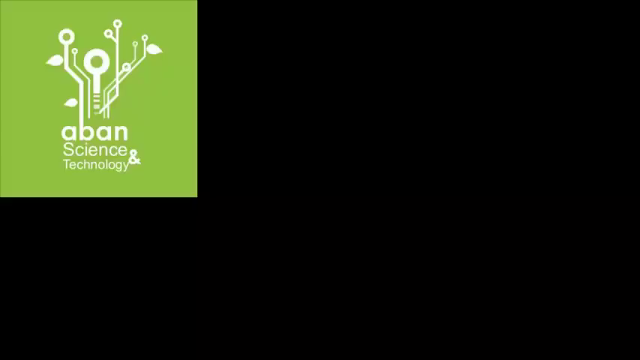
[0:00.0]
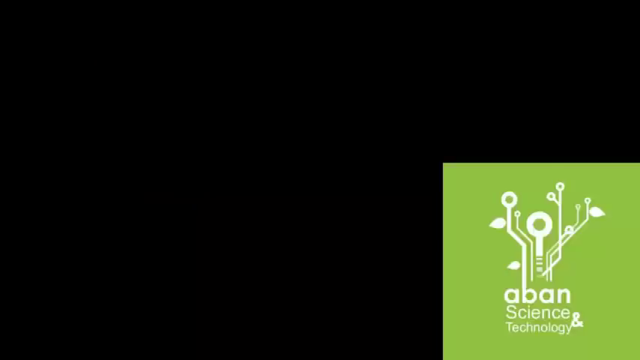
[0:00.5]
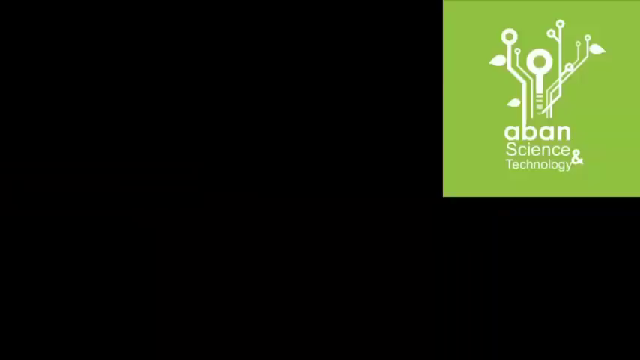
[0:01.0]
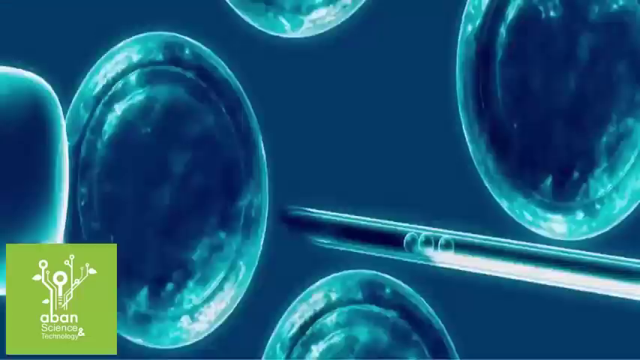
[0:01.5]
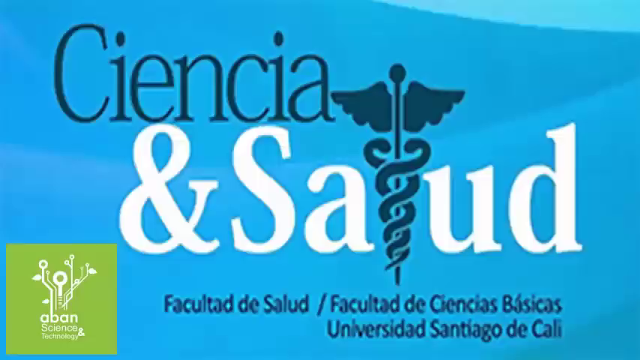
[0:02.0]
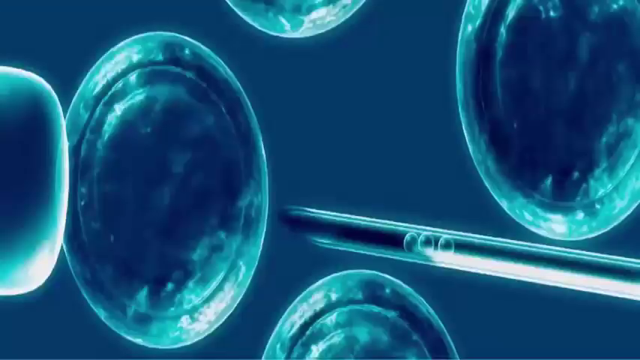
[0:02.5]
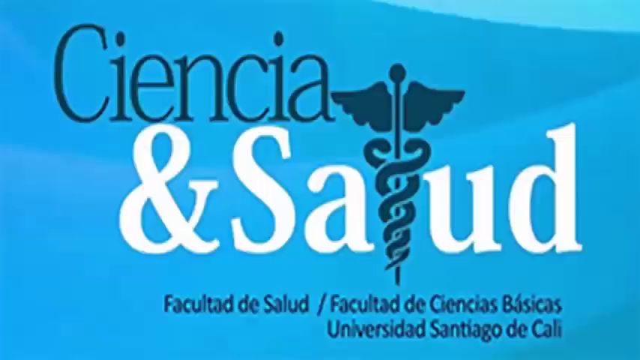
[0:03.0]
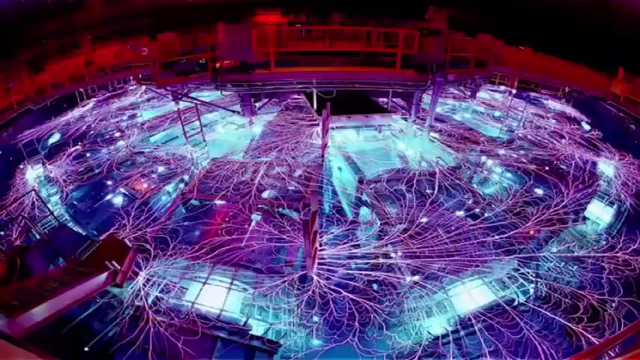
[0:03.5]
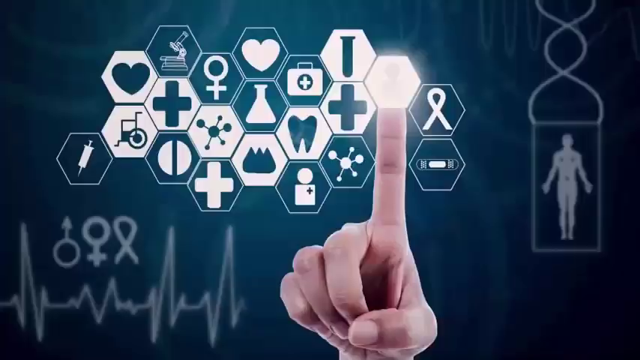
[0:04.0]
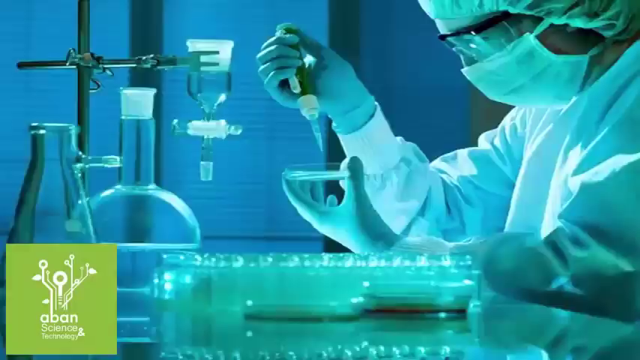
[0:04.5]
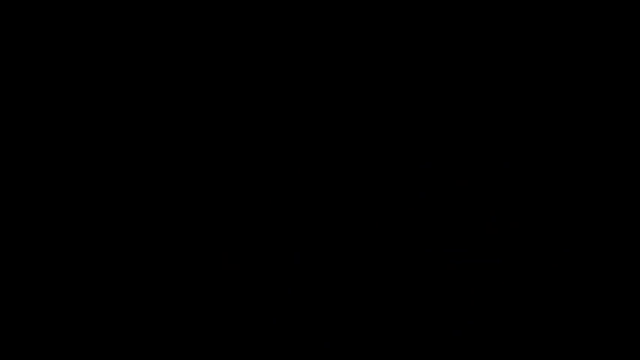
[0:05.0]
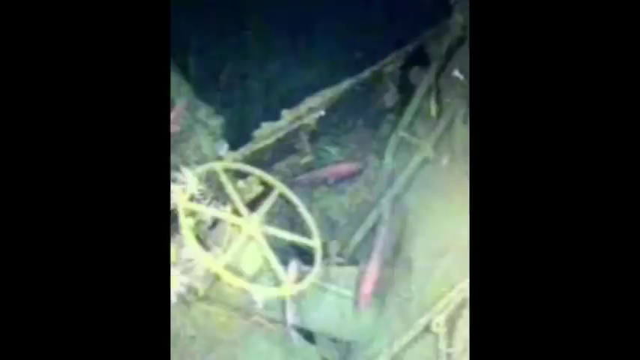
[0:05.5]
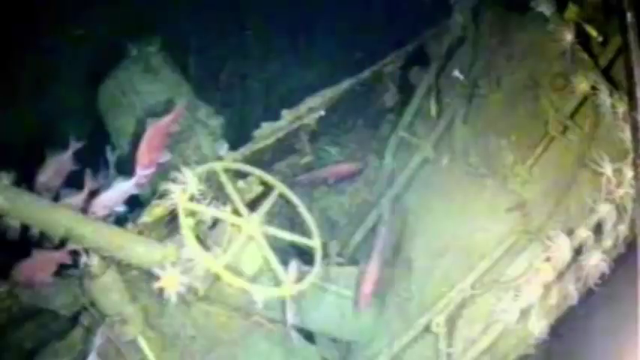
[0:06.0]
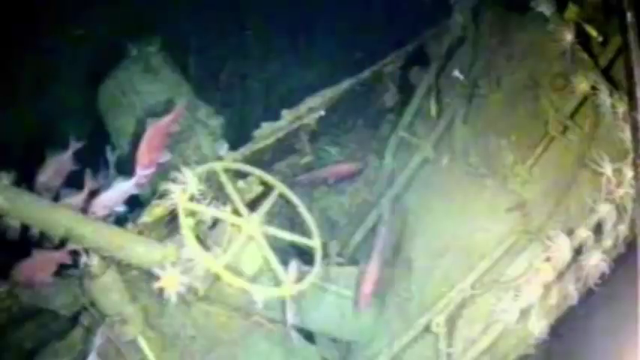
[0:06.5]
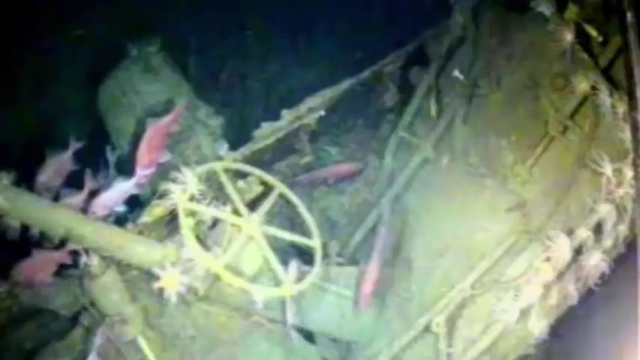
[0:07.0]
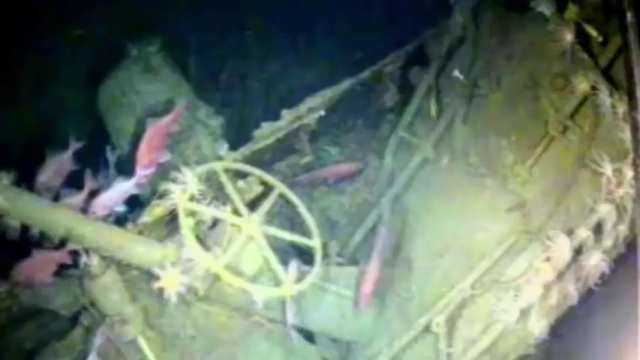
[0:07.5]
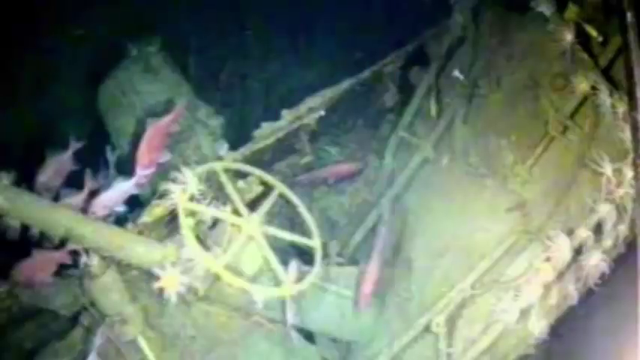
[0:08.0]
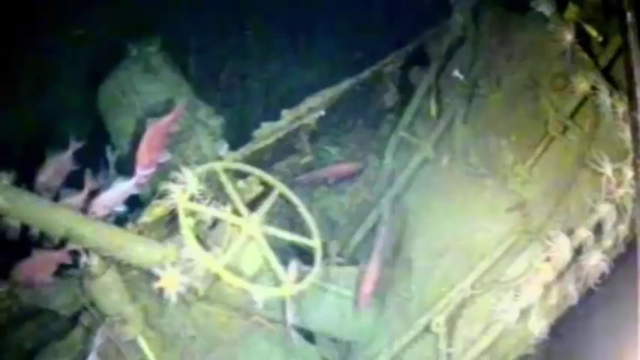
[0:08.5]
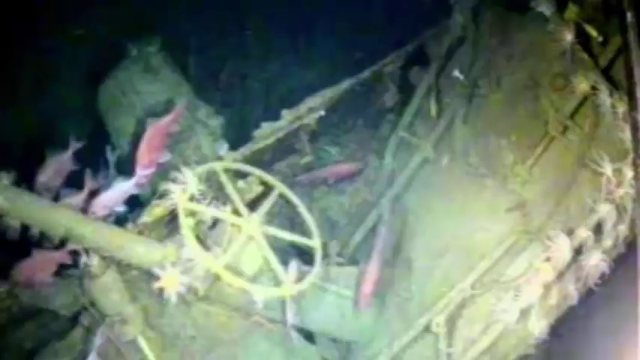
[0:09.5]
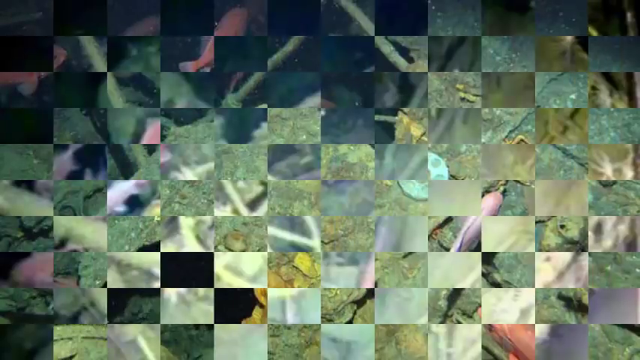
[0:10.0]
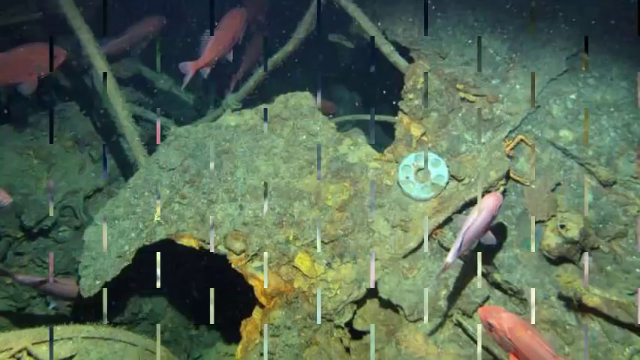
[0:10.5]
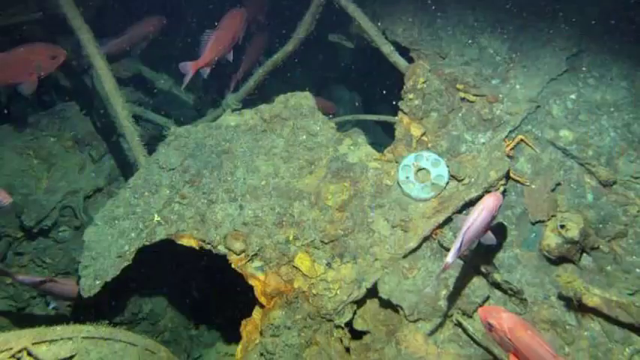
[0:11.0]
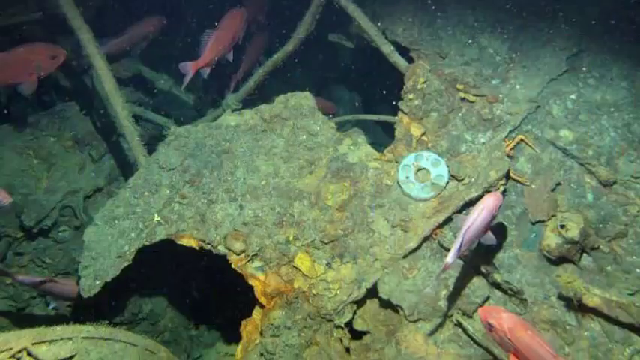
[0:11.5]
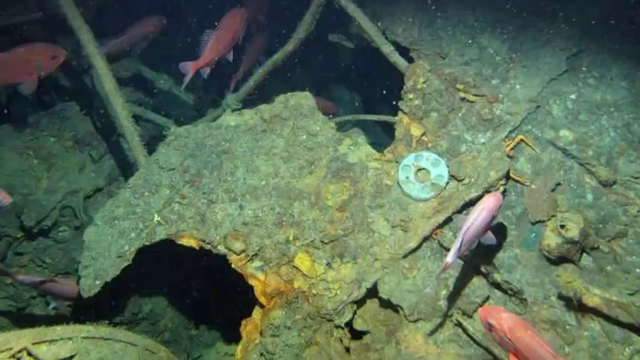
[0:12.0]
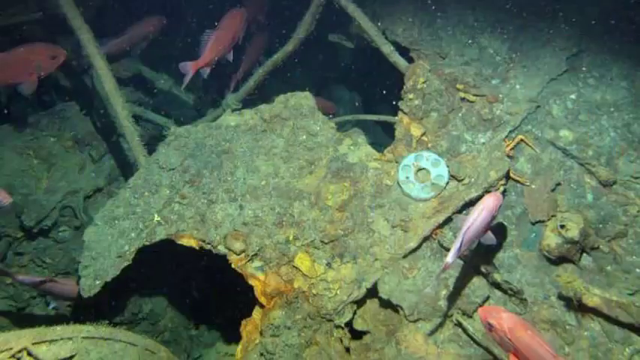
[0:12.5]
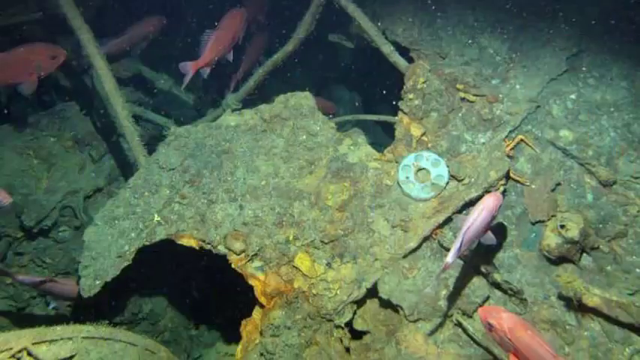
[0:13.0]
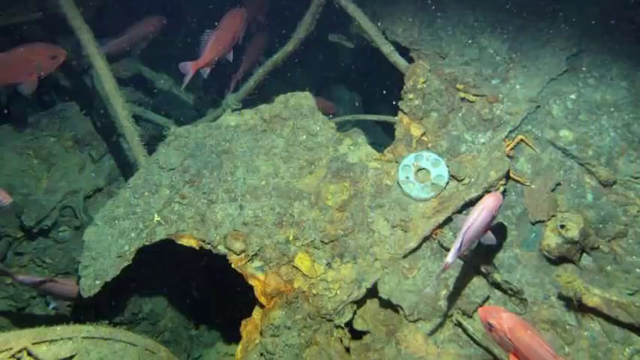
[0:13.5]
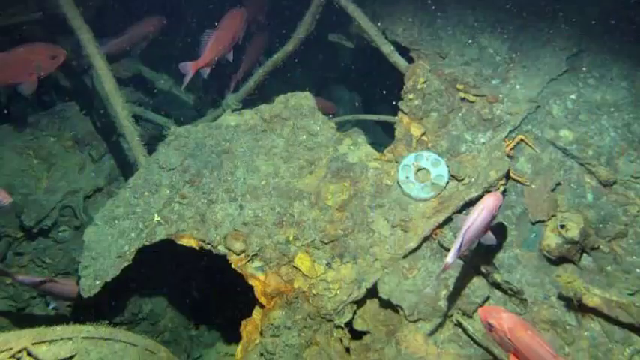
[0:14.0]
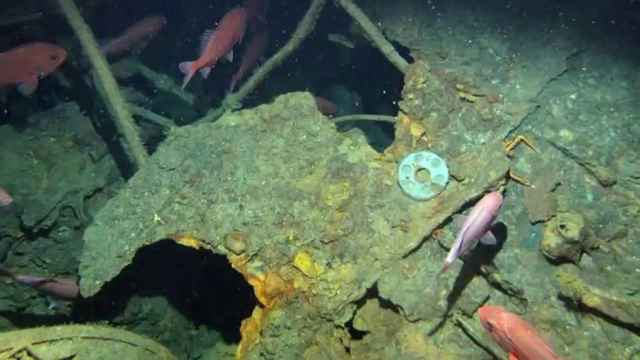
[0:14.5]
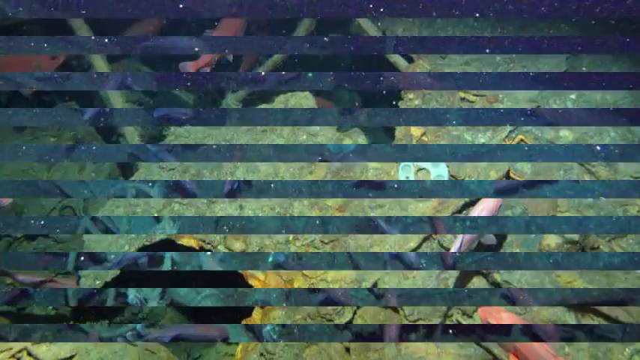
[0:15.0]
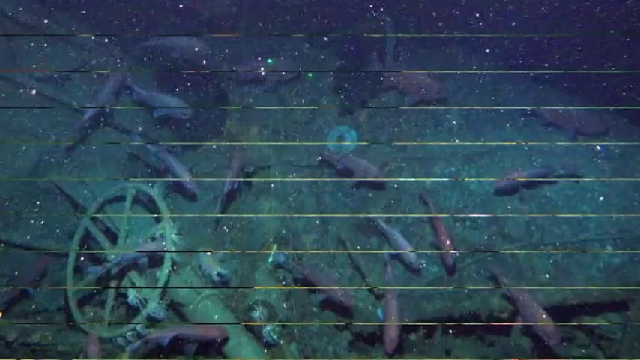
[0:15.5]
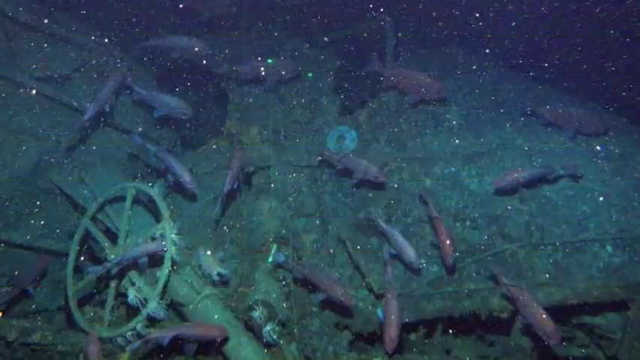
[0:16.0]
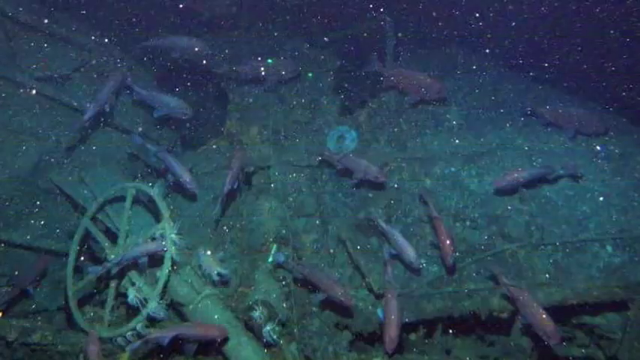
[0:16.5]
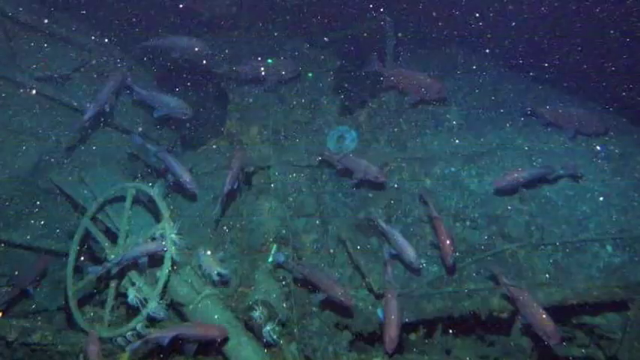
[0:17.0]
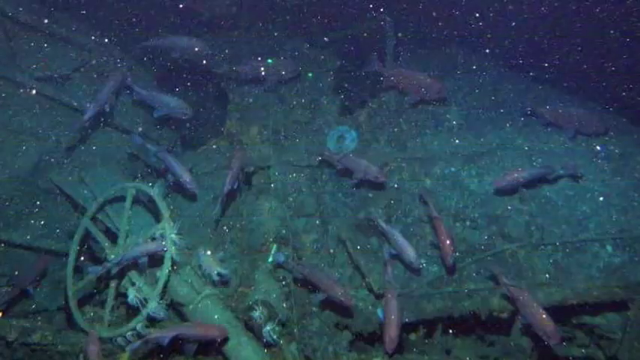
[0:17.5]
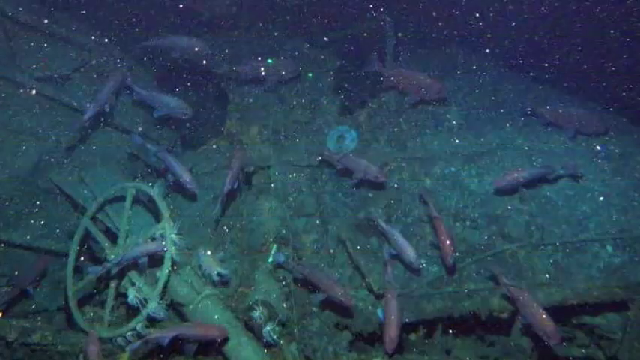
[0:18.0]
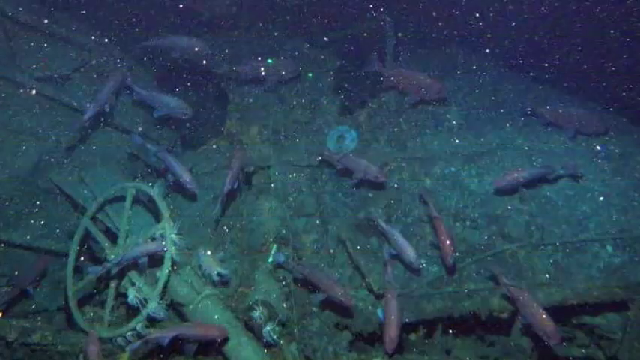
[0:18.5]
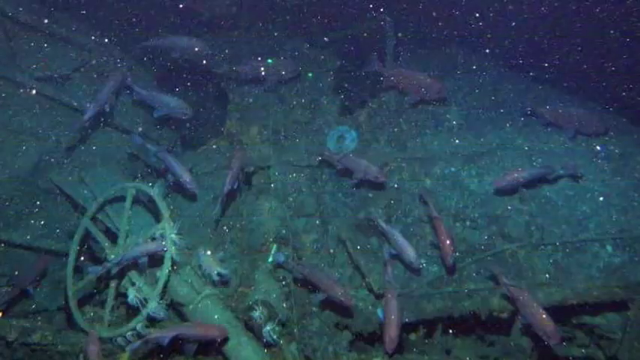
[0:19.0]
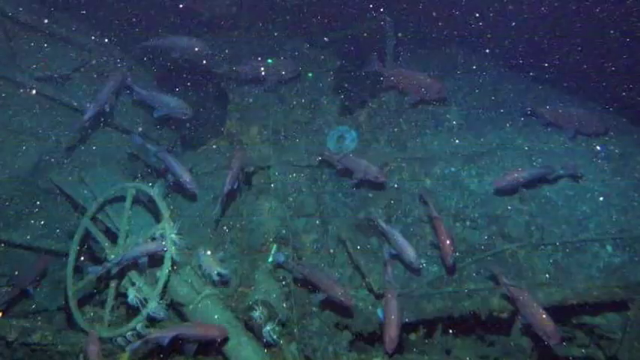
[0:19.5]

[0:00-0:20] On a black background, a neon green square logo design appears, reading "ABAN Science and Technology" in white with a white logo design above it. The logo bounces from the top left corner to the bottom right corner, to the bottom left corner, and to the top right corner. A slew of different background images of various scientific experiments and processes then flash in sequence very quickly before settling on an image of an underwater shipwreck with fish and a boat steering wheel visible in black and white; black borders open up to reveal this image. A grid-like transition shows another angle of the wreck: the boat is completely submerged and surrounded by fish, with barnacles and other growth in a green color on its surface. The fish are red and pink and swim all over the place, and a circular ring is visible in the center of the image. A vertical line animation then shows a darker image of the same boat, with the ring in the center and the steering wheel in the bottom left corner, and approximately a dozen grey, blue and dark red fish swimming around the surface. White dots appear all over the screen, possibly due to the low lighting.